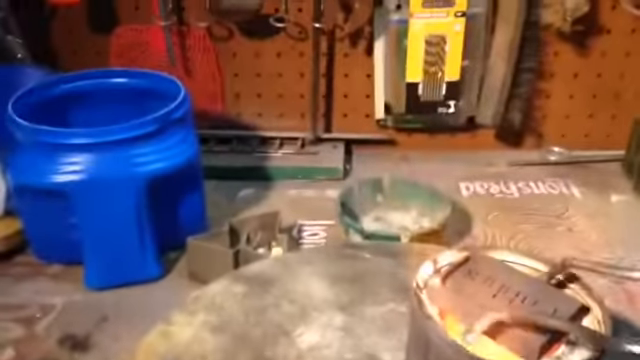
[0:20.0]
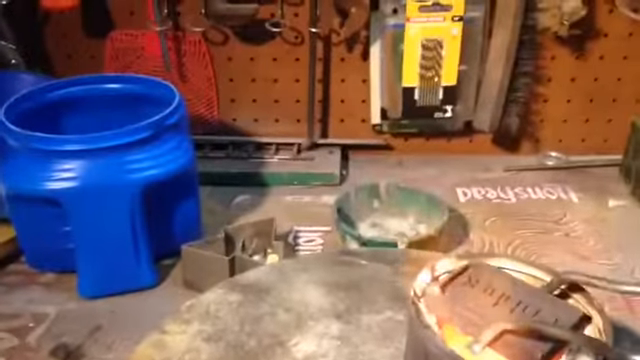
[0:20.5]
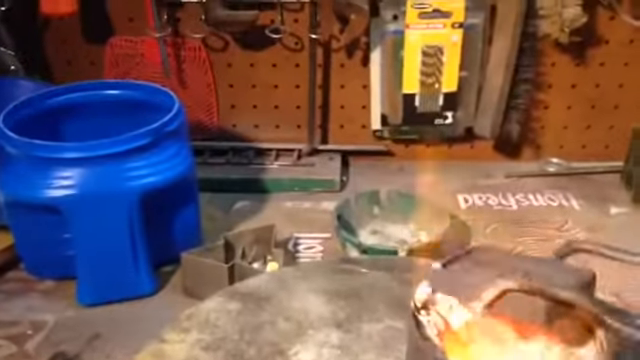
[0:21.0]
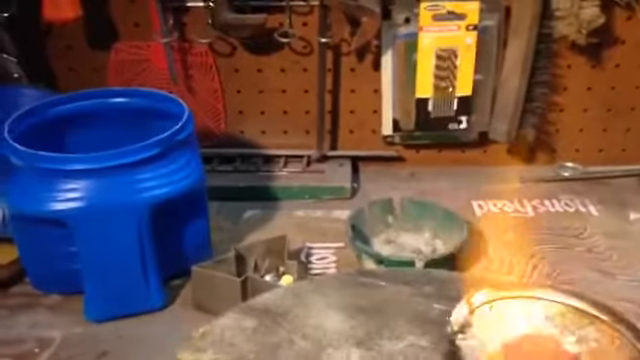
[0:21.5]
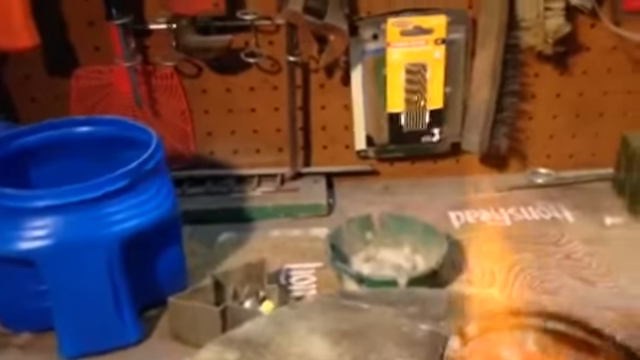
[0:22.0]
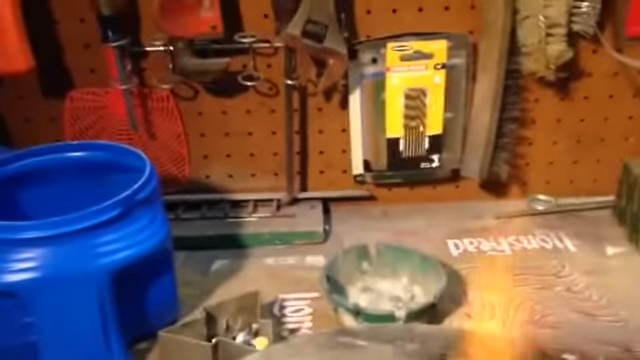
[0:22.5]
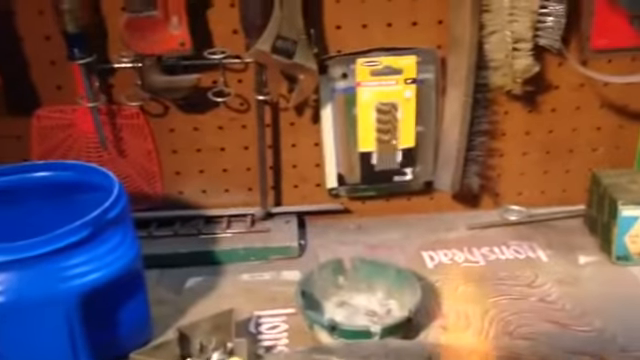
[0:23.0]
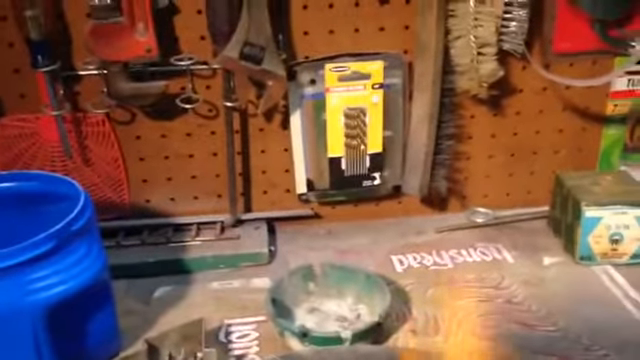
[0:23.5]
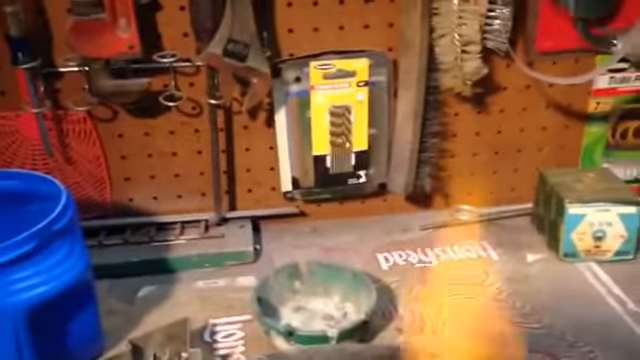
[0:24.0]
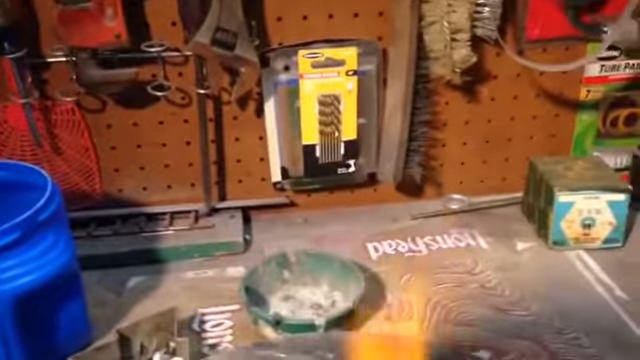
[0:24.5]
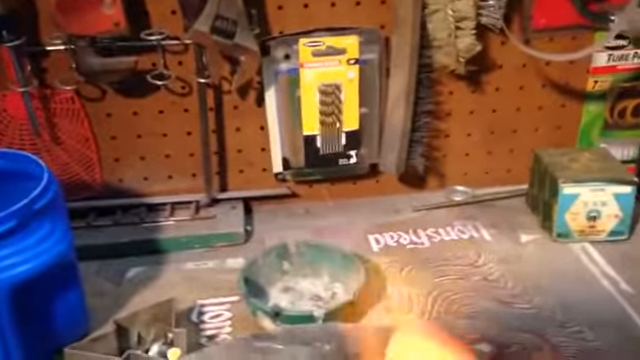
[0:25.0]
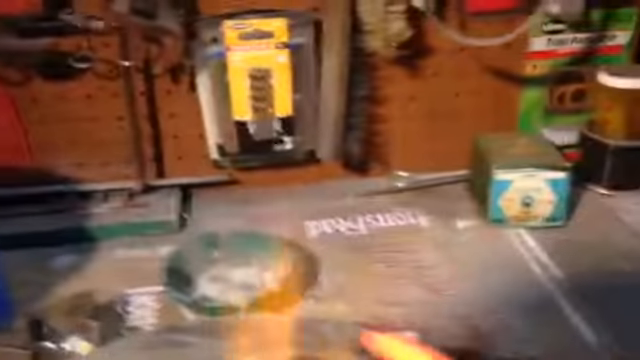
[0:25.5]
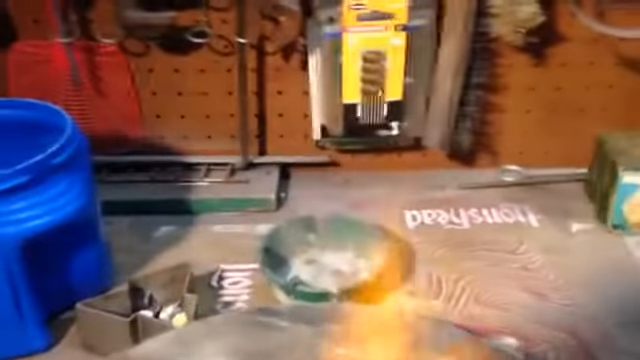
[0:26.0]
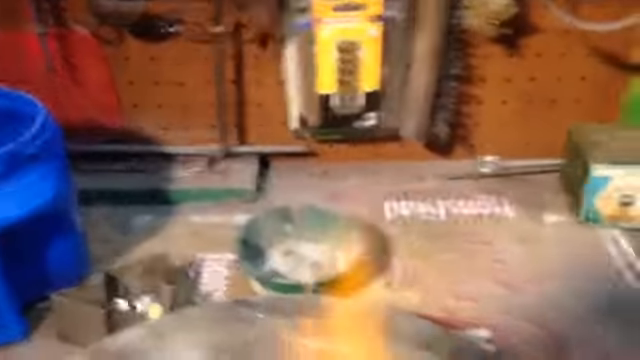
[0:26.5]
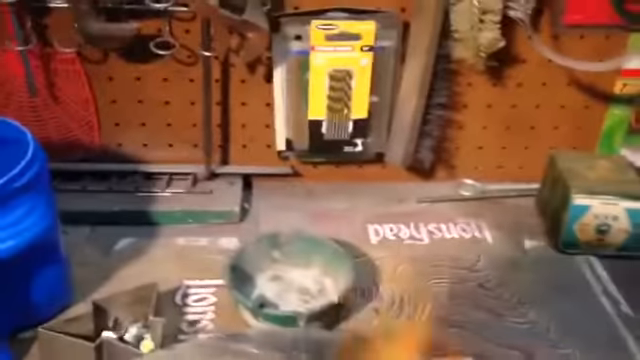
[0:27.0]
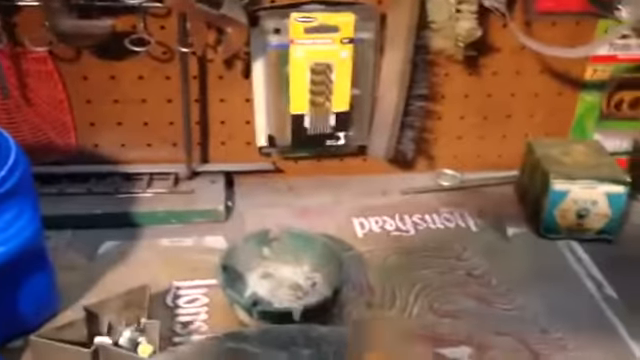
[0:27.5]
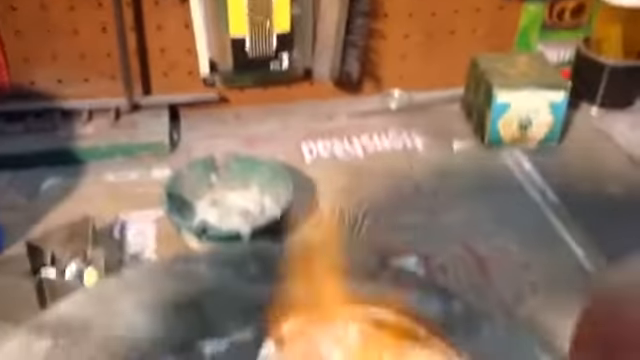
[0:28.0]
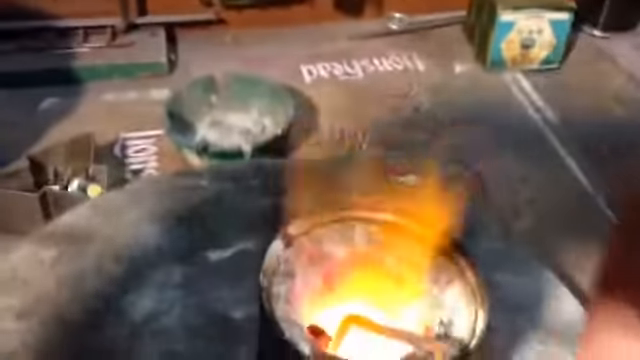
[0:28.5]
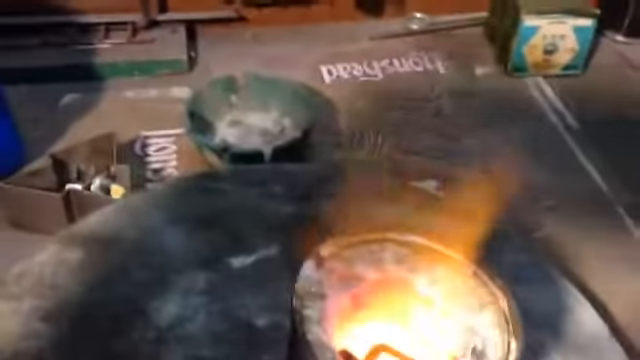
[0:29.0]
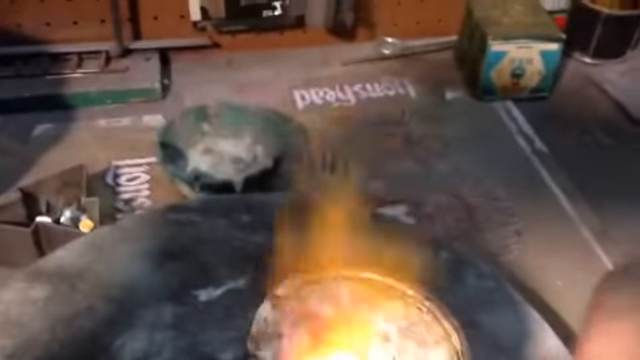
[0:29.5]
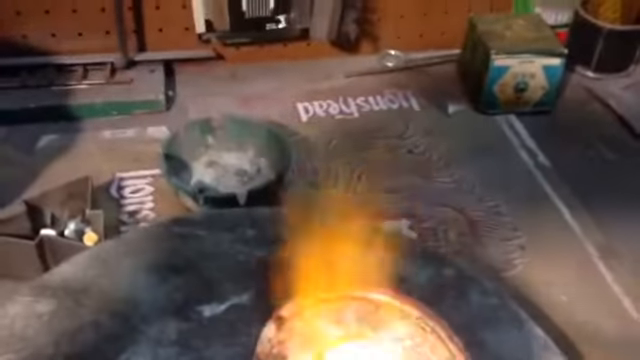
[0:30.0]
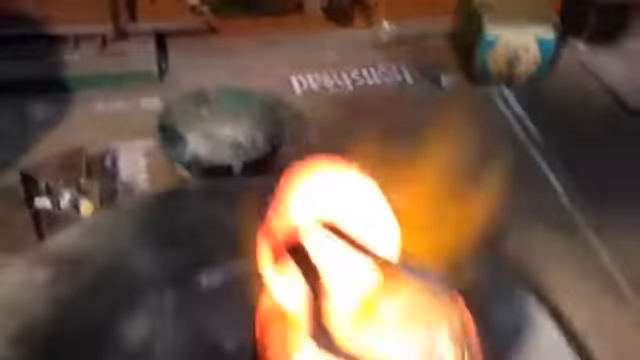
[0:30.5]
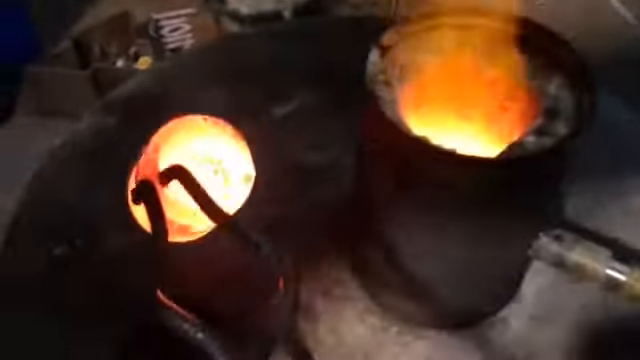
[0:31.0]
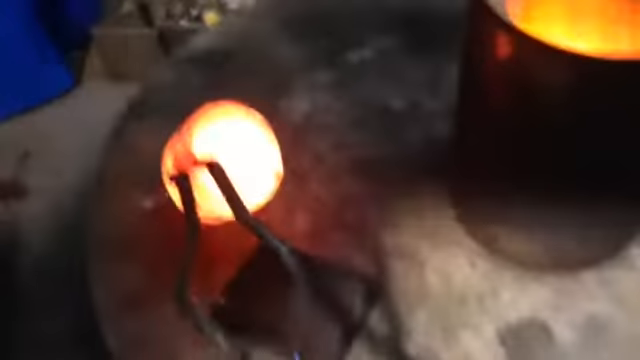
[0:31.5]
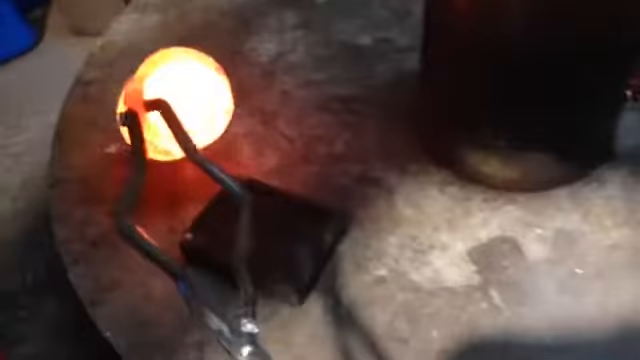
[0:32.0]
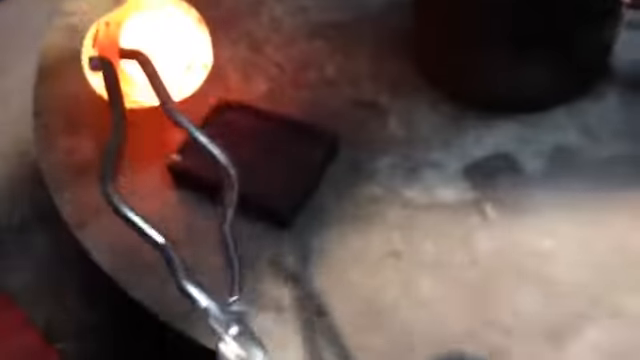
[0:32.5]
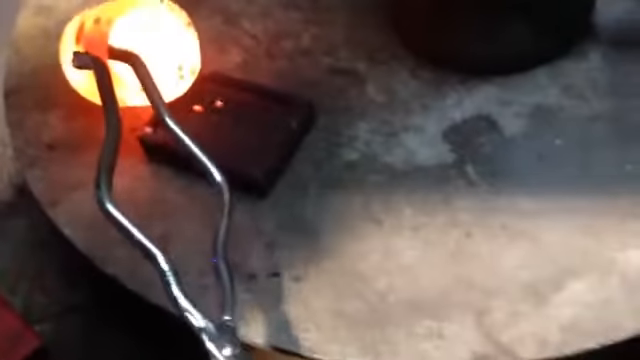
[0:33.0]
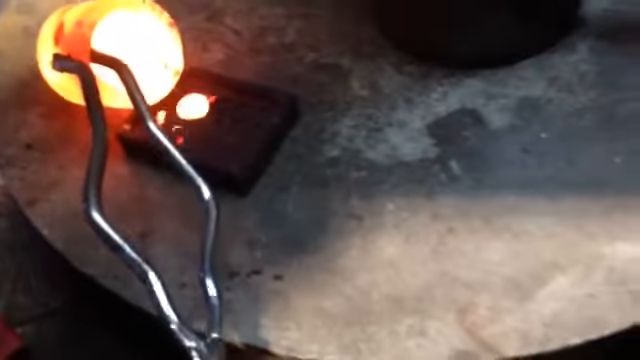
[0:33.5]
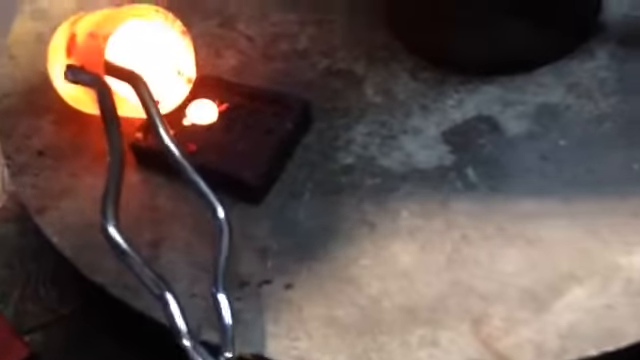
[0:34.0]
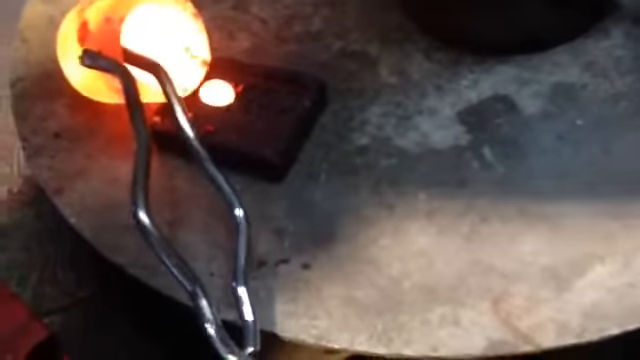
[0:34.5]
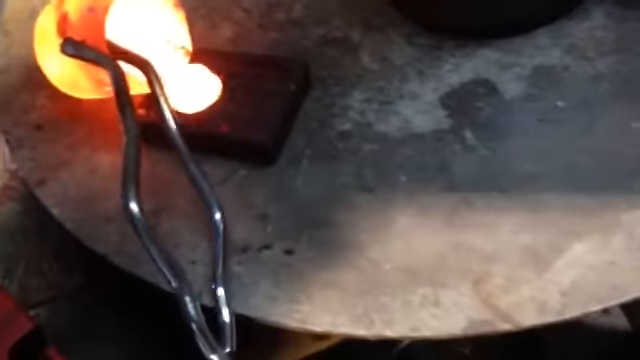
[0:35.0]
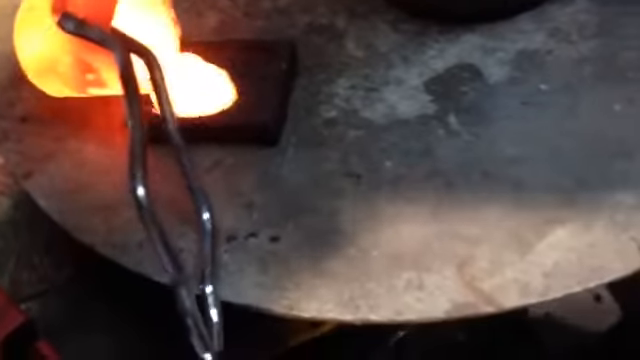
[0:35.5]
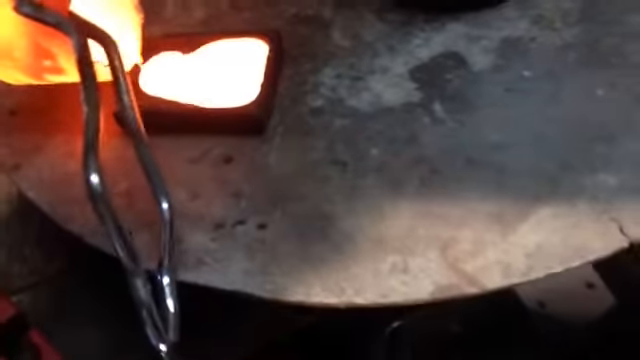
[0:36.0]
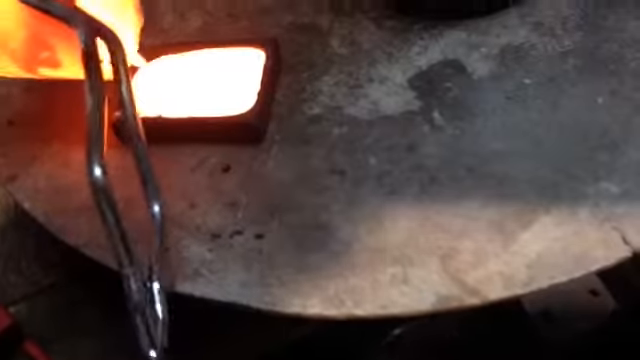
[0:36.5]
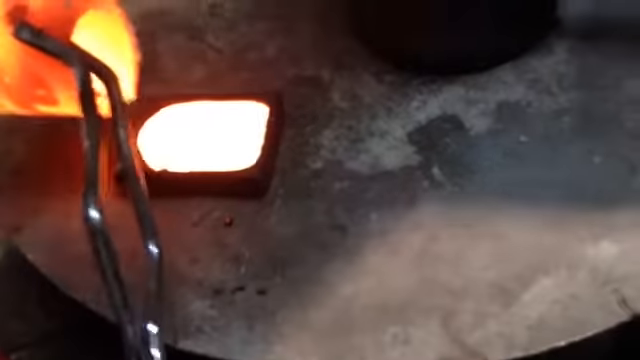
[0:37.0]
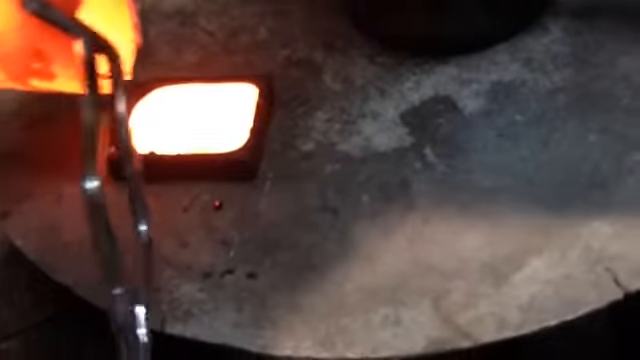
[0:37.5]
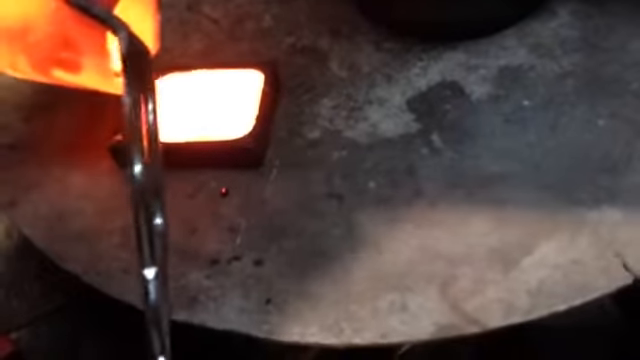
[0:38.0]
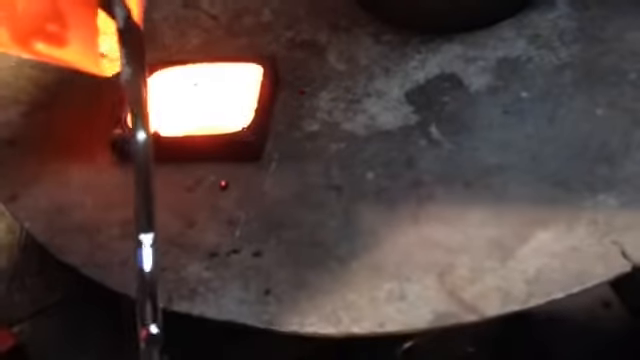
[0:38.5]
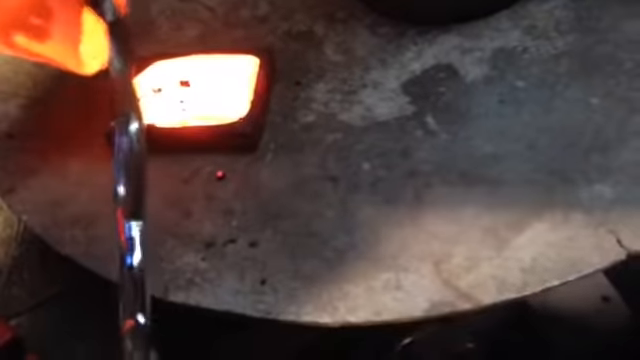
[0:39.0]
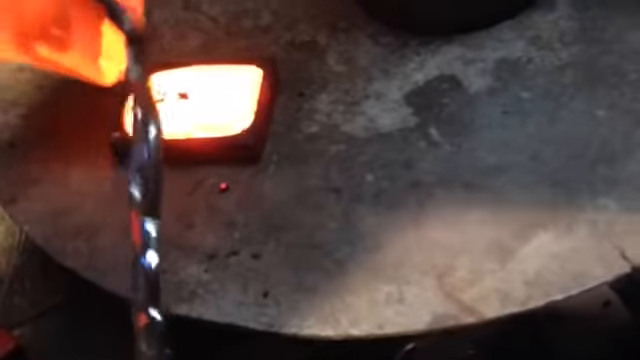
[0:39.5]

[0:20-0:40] A grey pegboard dotted with small holes holds tools: grey brushes with brown handles on the right side, some clamps, screwdrivers, and a silver wrench hanging downwards. The bottom of the table looks grey, with what seems to be a faded green ashtray with little edgings all around it. A blue plastic barrel is to the left, and a grey rounded metal piece like a table is visible, with a yellow flame coming out of the top of a small brown barrel. A person uses the grey metal tongs to pull out a very white and pinkish piece of rounded metal and pours a liquidy substance into a square. The setting looks to be a workshop the person has set up for this type of work.